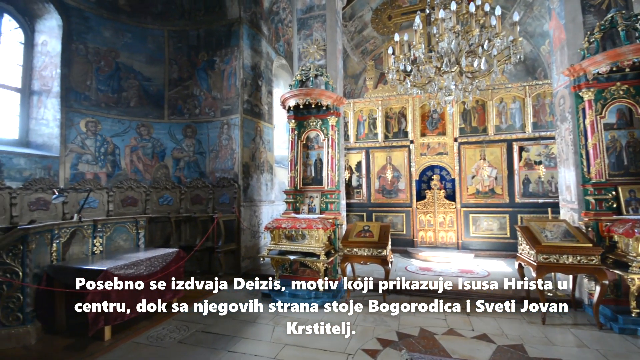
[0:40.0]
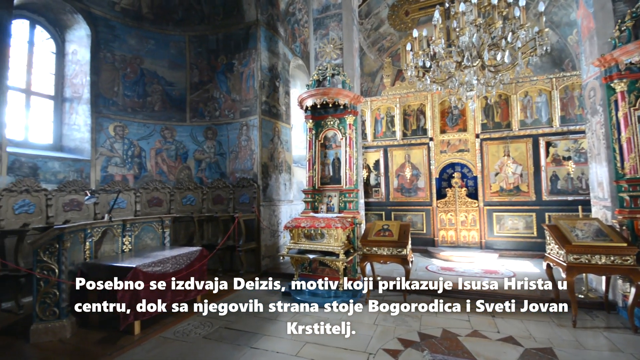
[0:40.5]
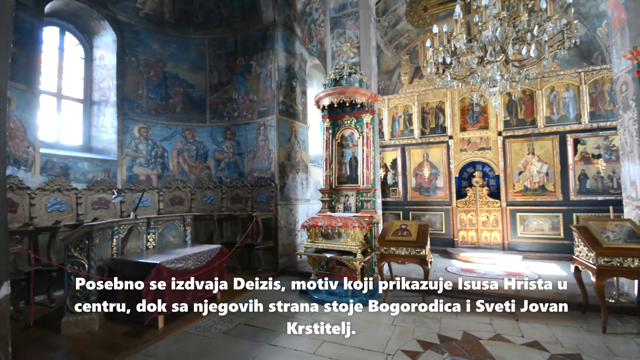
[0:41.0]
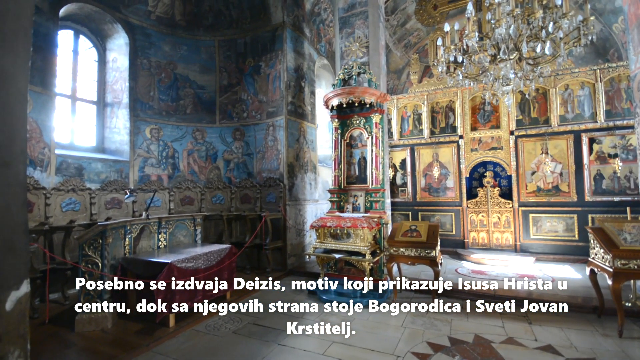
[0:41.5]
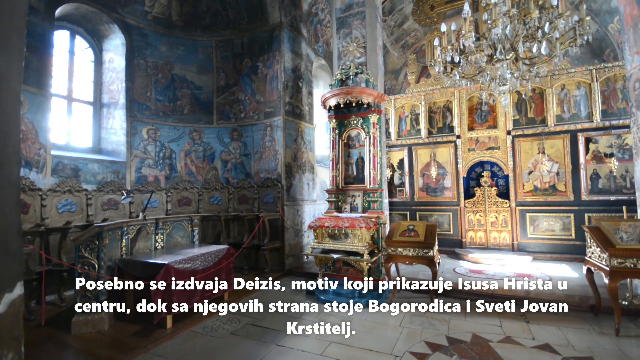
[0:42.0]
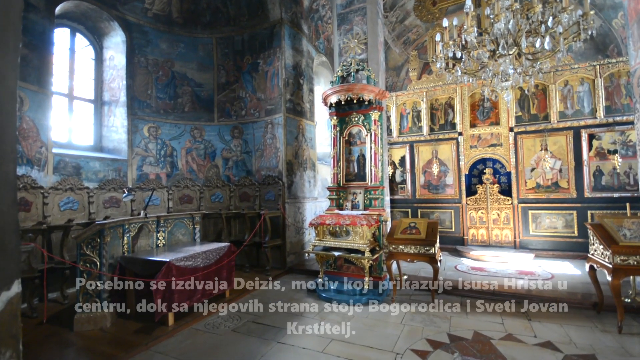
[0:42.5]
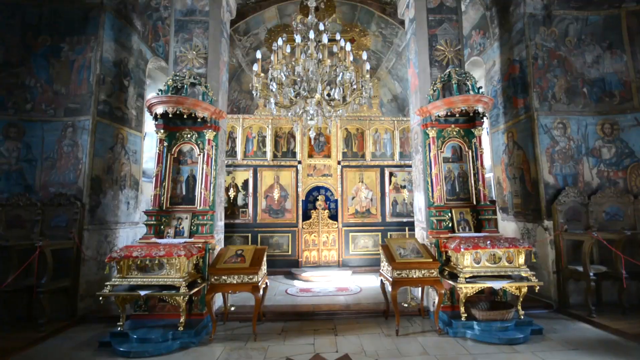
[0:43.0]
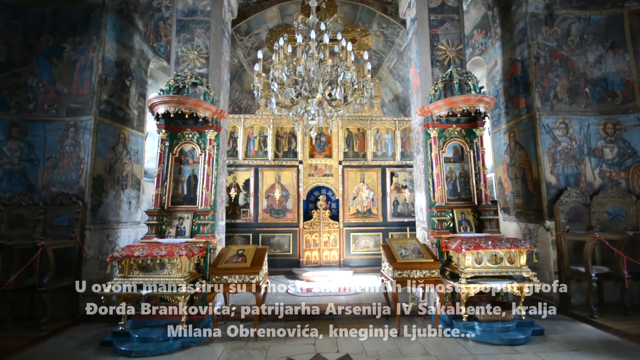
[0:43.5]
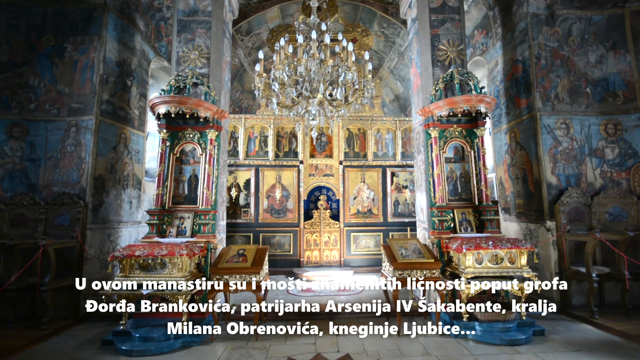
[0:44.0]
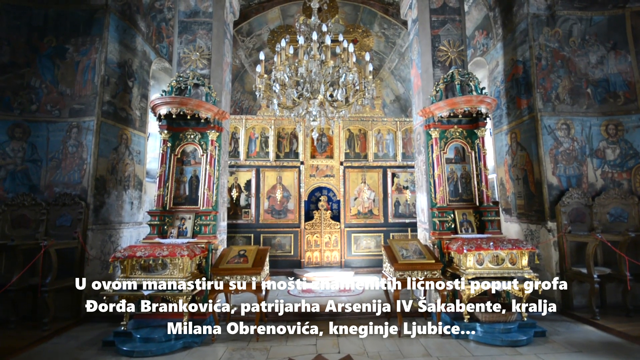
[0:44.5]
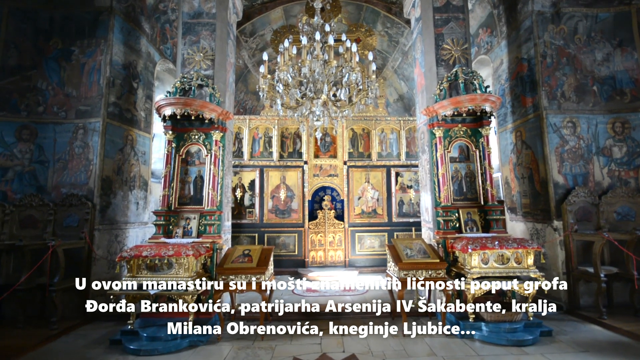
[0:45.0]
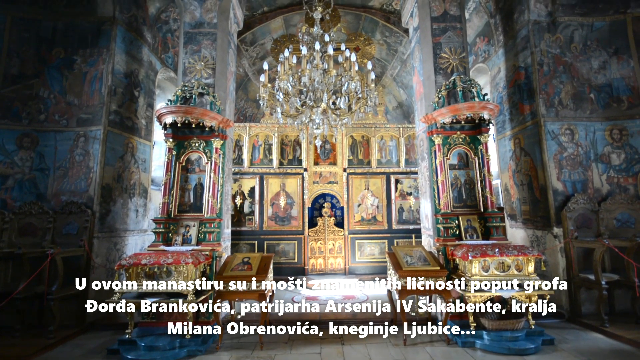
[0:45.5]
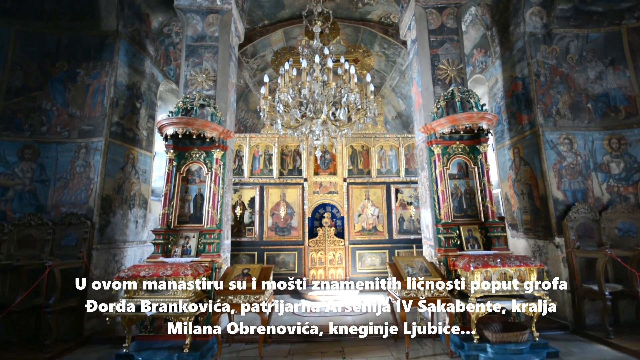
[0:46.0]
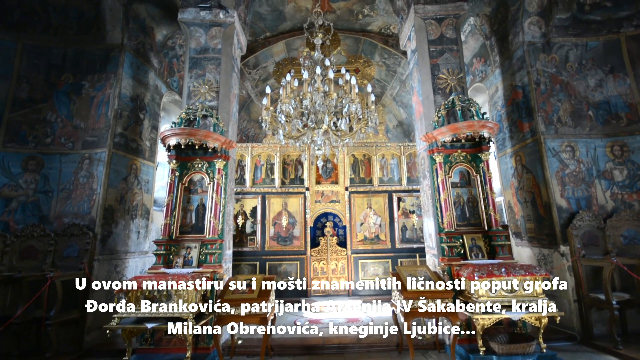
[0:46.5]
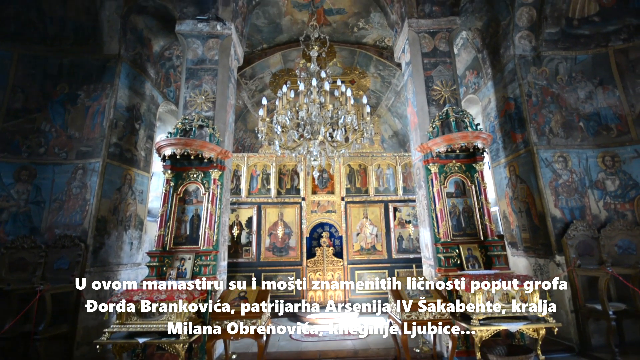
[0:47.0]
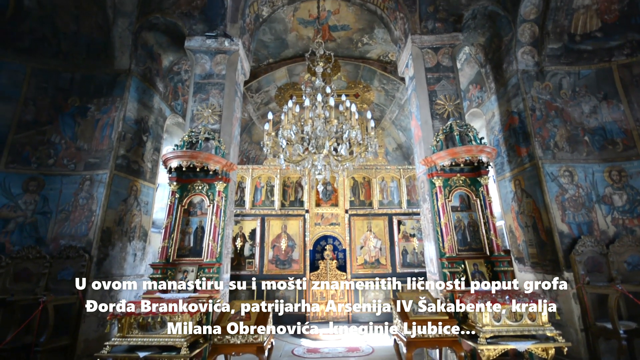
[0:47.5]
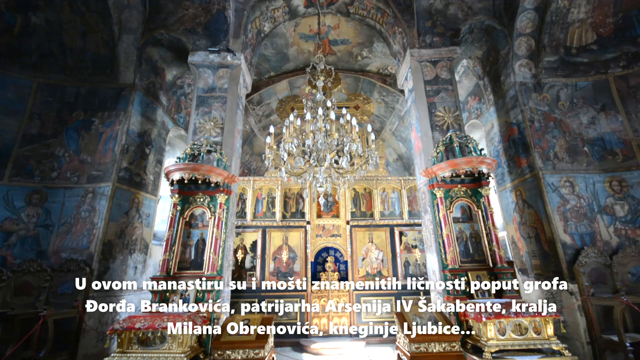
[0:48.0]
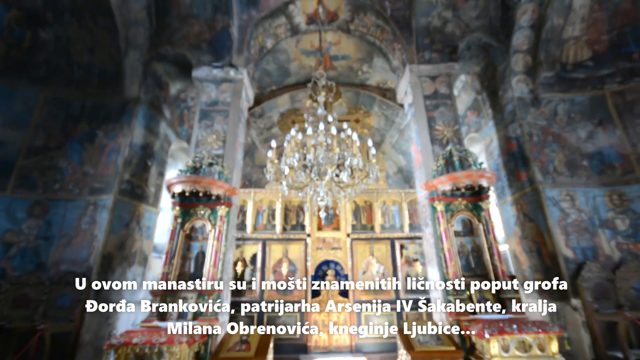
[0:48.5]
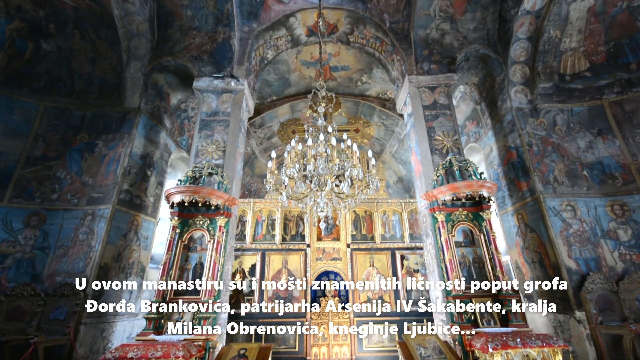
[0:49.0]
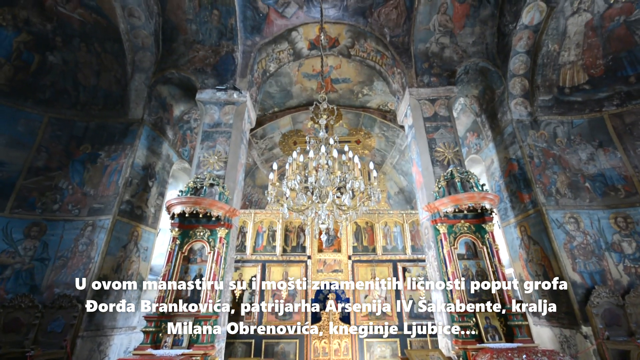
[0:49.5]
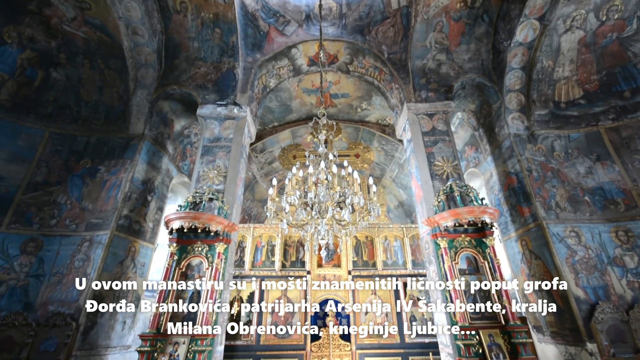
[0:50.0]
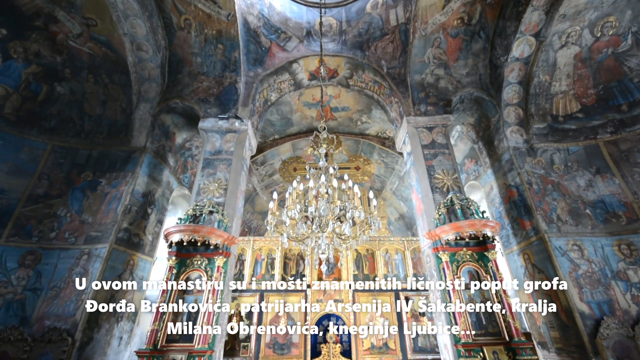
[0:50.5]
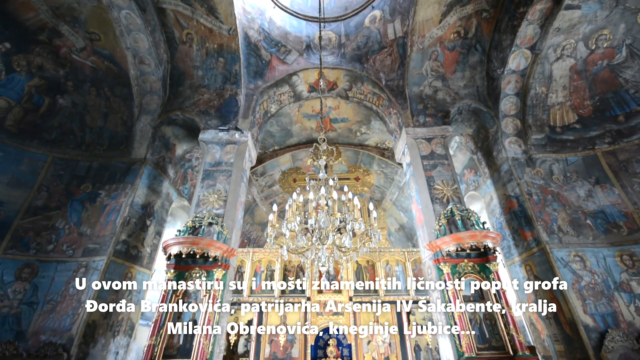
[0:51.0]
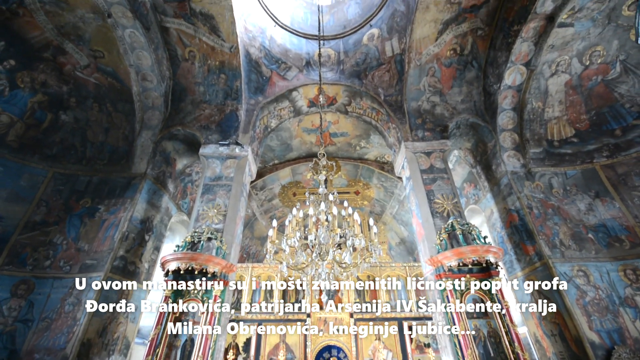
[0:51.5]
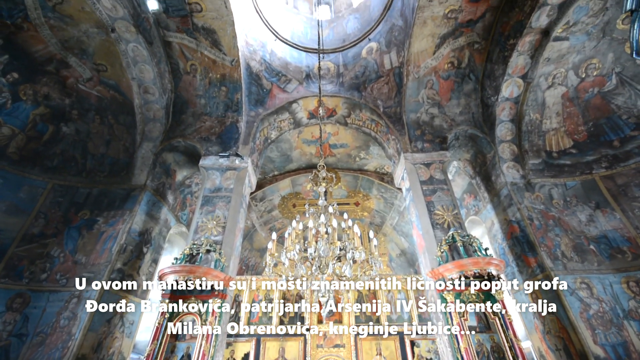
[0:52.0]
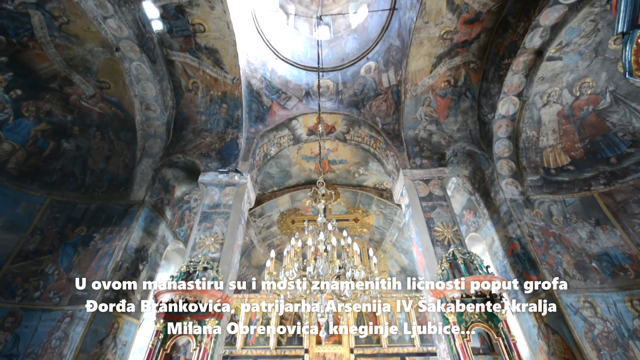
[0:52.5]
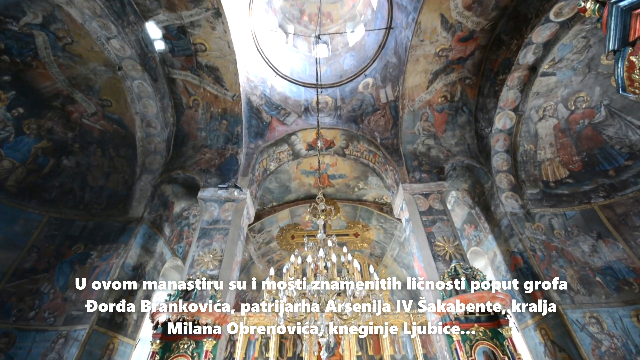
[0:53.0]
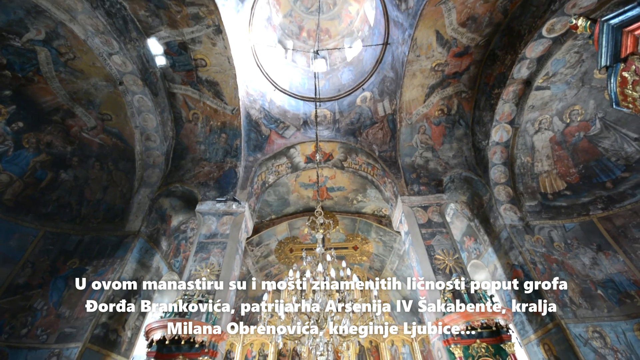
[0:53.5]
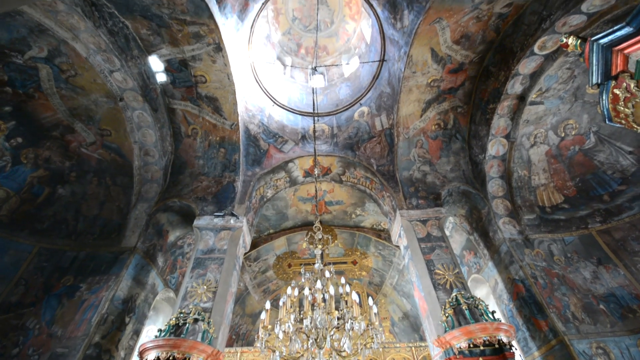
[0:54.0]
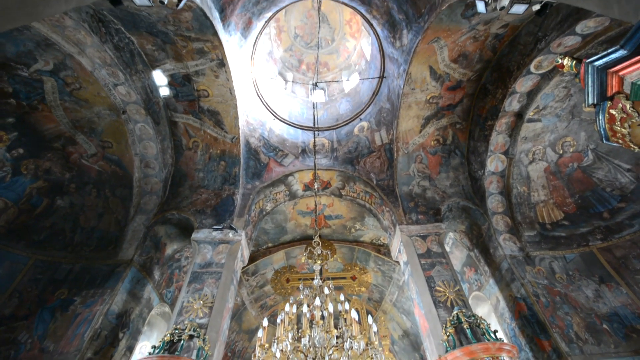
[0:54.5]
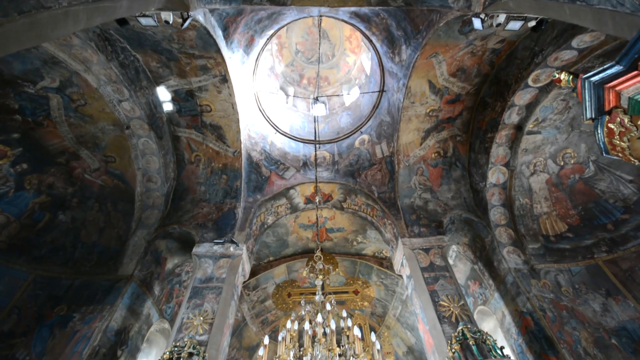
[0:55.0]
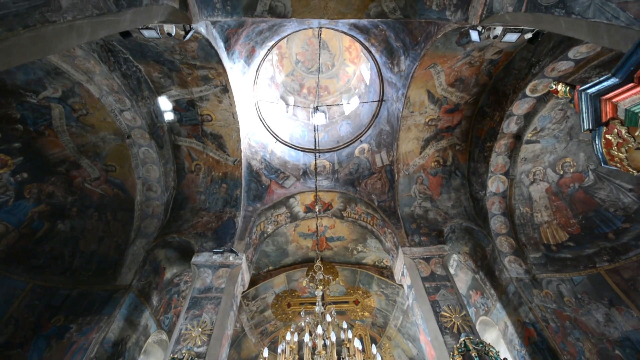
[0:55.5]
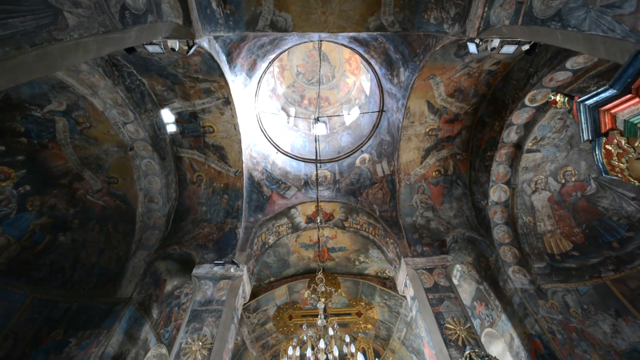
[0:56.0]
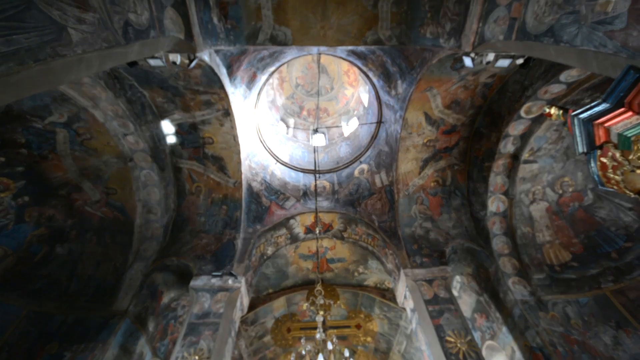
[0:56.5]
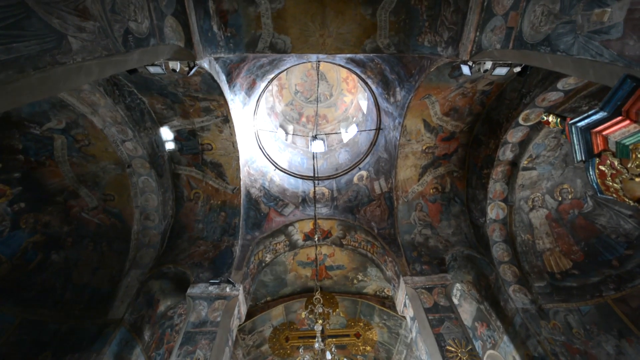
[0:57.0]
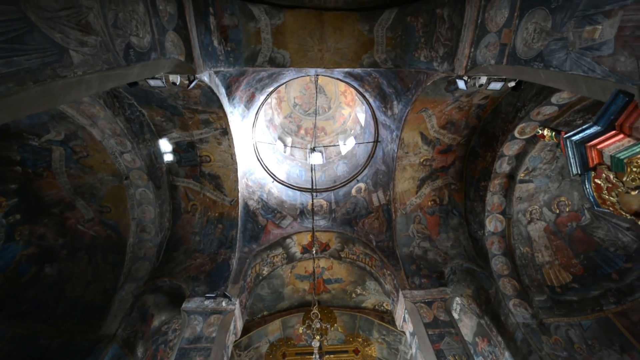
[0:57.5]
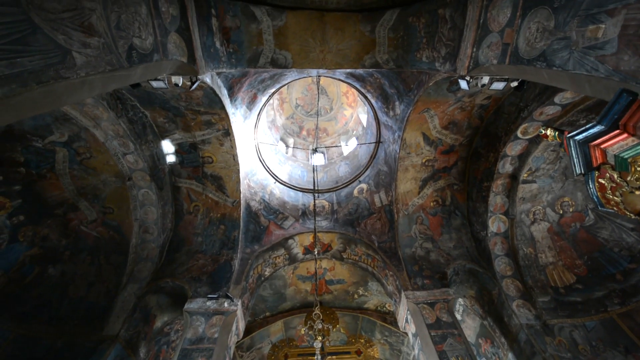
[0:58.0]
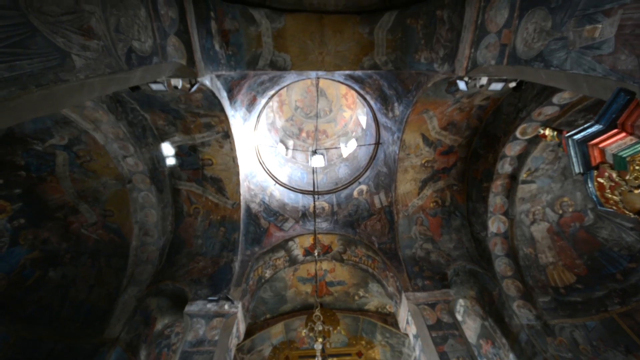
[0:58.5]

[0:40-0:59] In a room, paintings that are colorful but not vivid are separated from each other, and there are chests and desks. A window on the left is letting in light, and the chandelier is hanging in the center of the room. The camera rotates to the left, then stays in the center of the area with the chandelier. It goes up and the image brightens, revealing paintings going up the wall and on the ceiling. Words in a language other than English are written on screen. The area with the chandelier is bright, and it brightens further as the camera points to the ceiling. The paintings look a bit dull but still have color, and it appears as if the entire room is painted with different portraits, mostly depicting people. Some of the desks and chests appear to be slightly open.